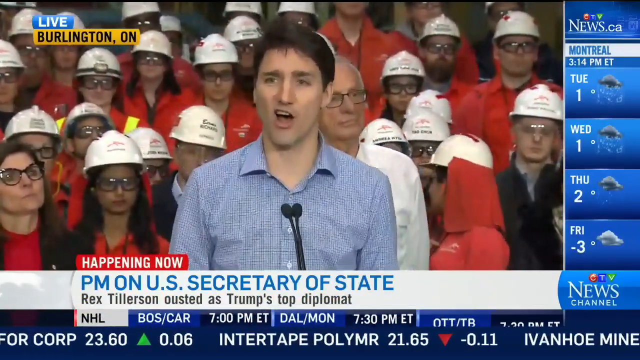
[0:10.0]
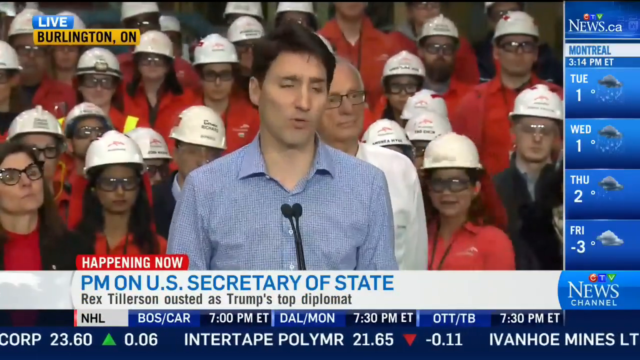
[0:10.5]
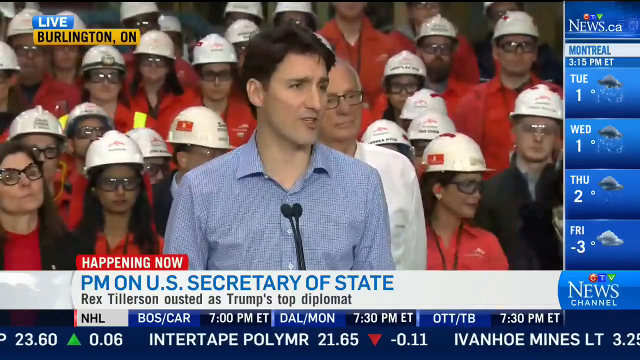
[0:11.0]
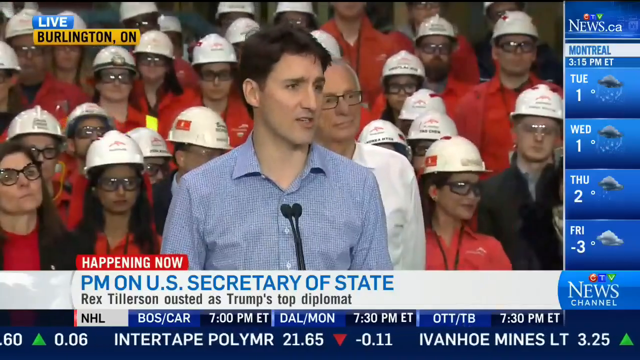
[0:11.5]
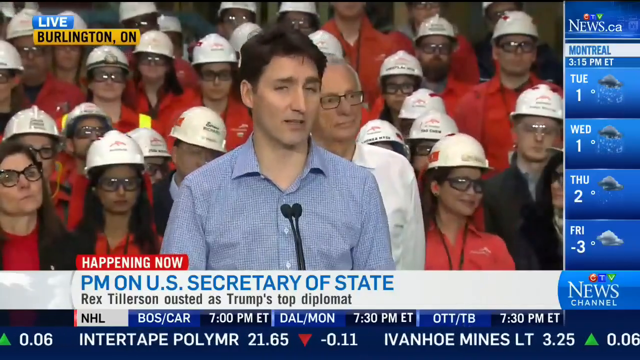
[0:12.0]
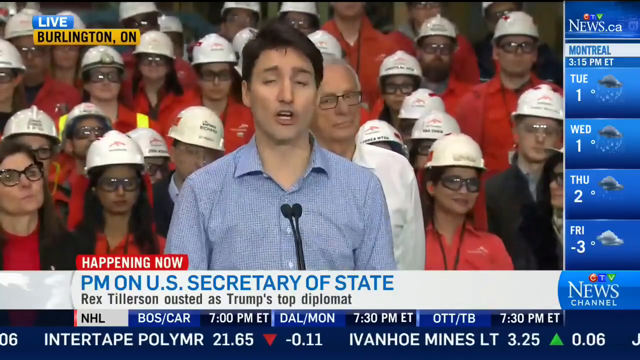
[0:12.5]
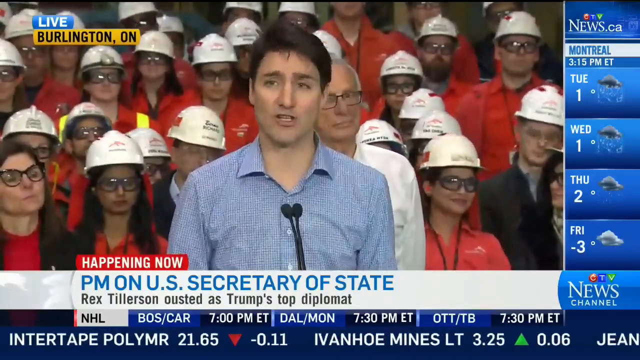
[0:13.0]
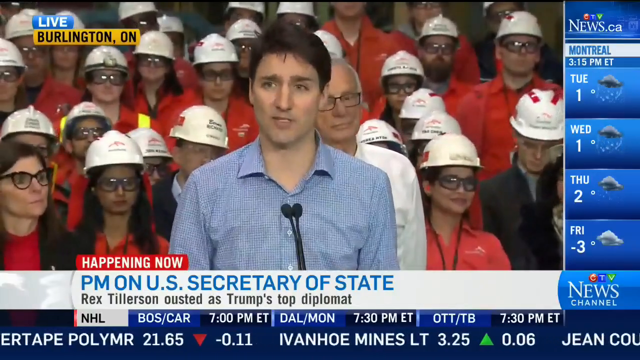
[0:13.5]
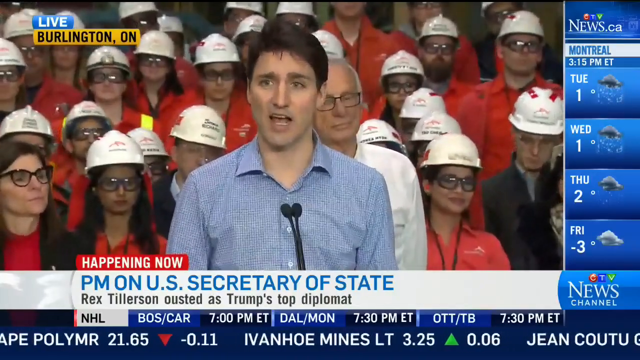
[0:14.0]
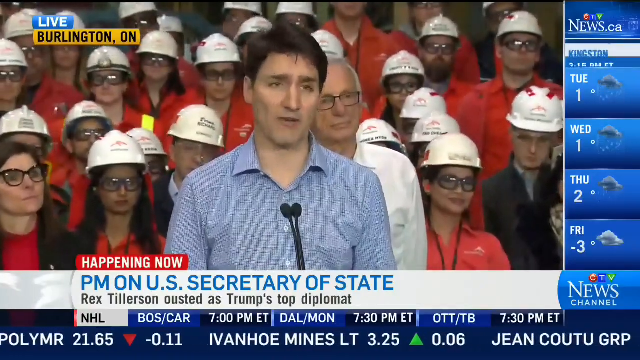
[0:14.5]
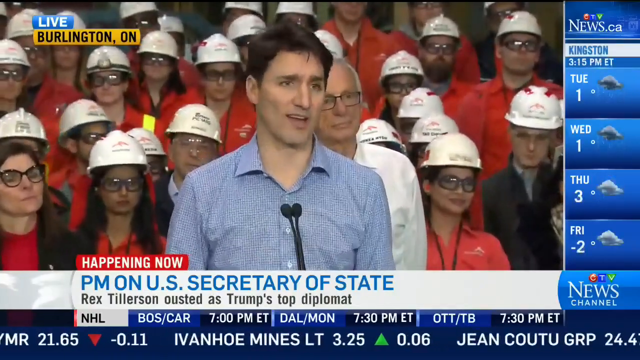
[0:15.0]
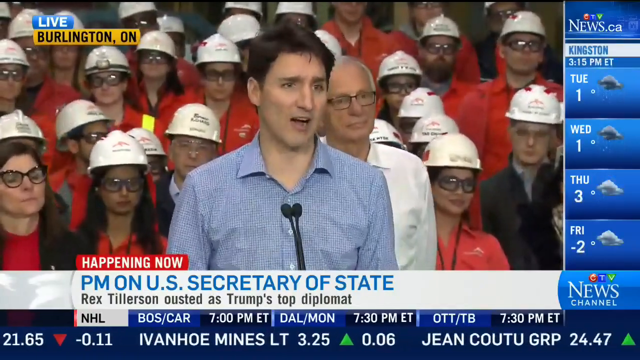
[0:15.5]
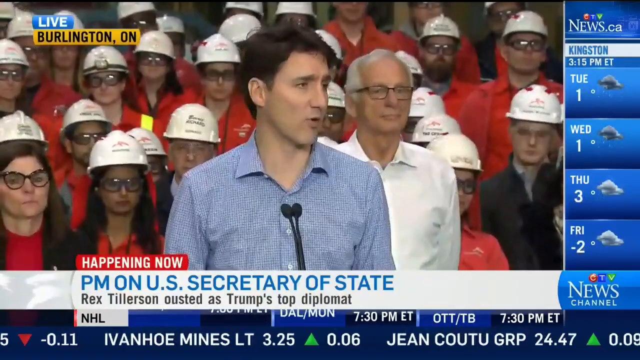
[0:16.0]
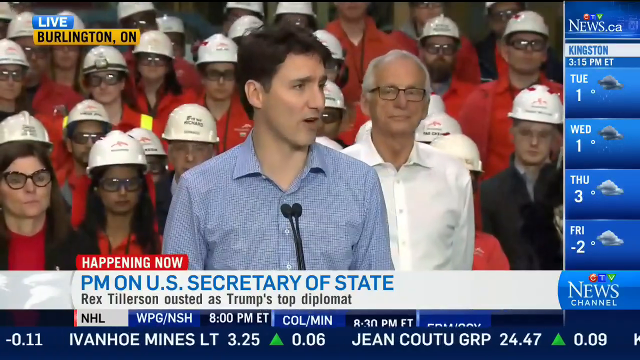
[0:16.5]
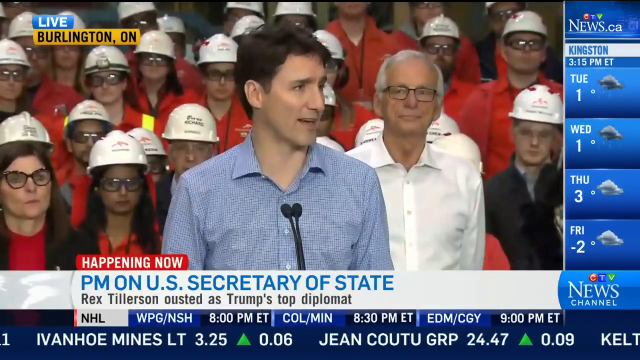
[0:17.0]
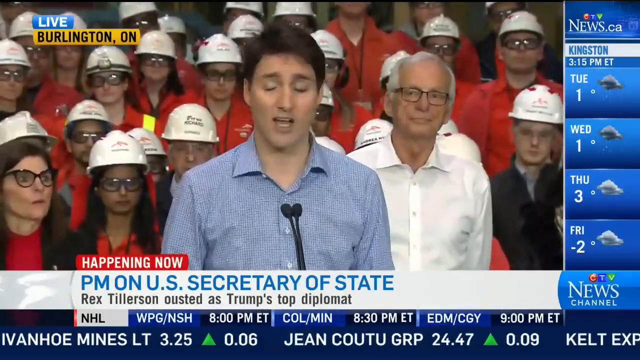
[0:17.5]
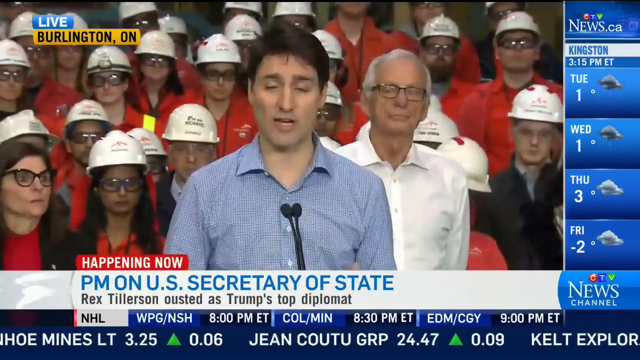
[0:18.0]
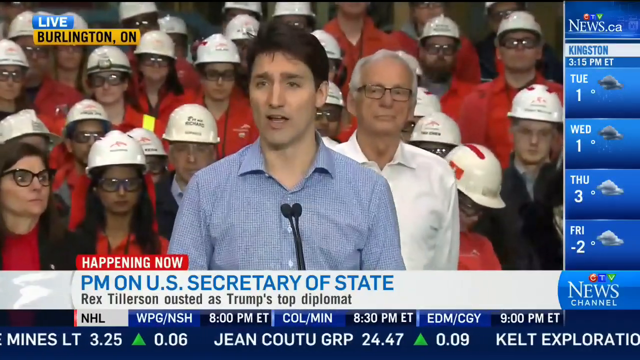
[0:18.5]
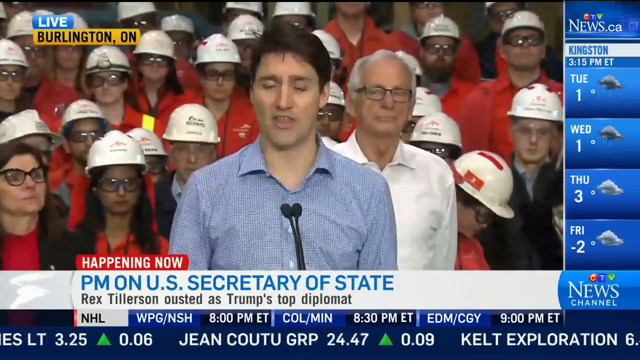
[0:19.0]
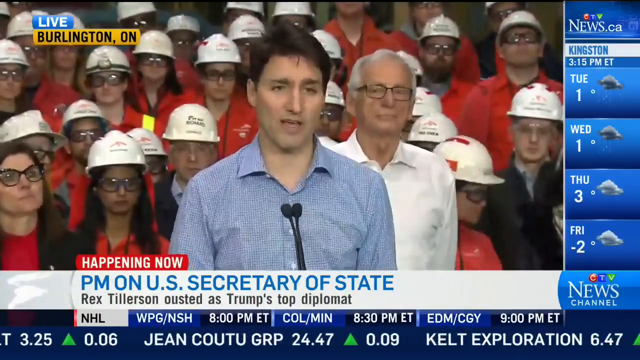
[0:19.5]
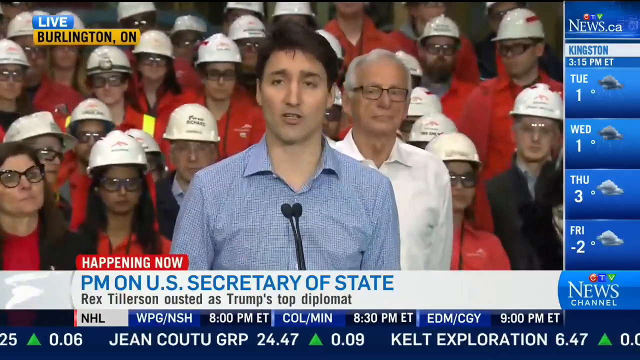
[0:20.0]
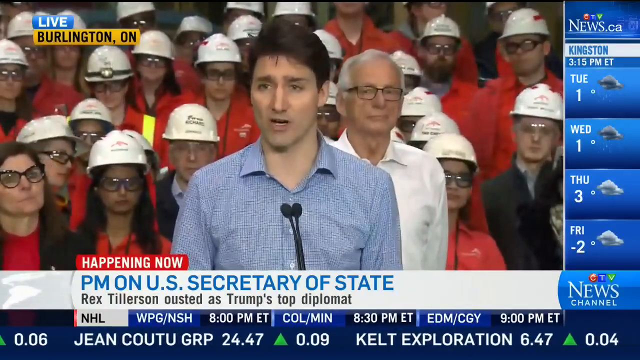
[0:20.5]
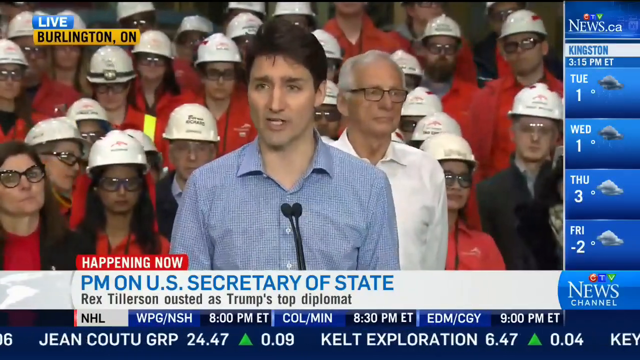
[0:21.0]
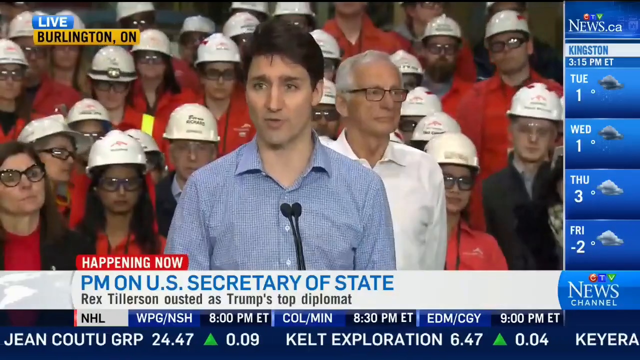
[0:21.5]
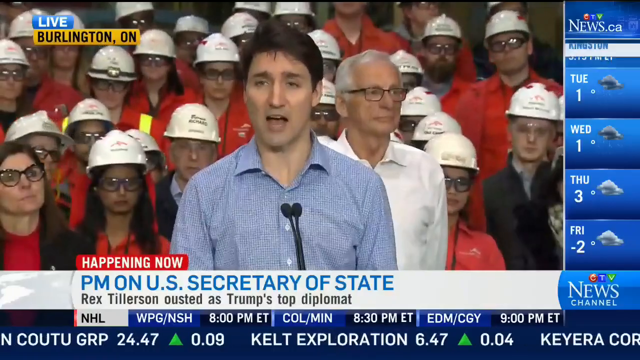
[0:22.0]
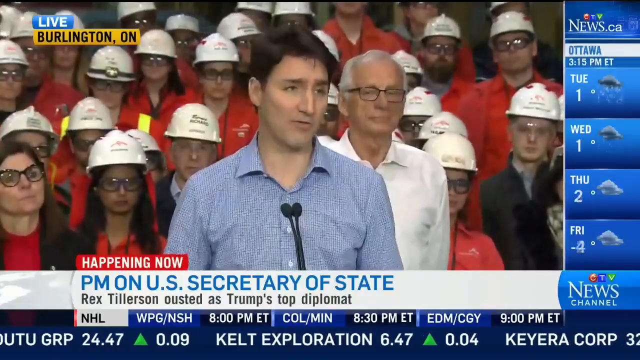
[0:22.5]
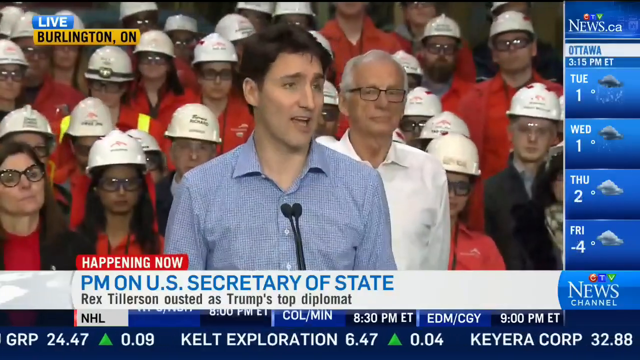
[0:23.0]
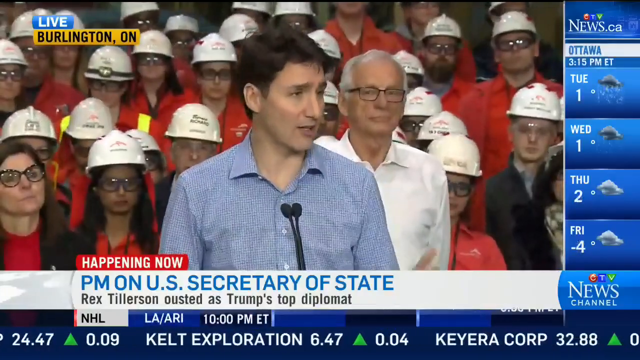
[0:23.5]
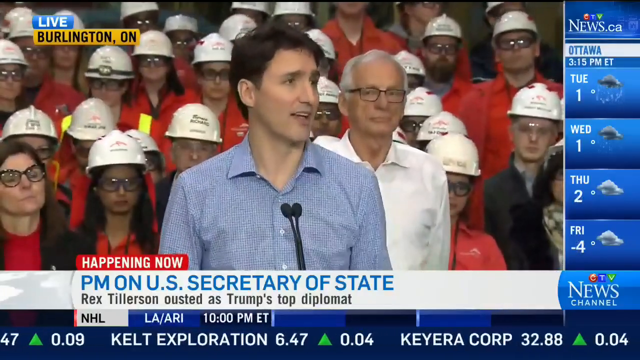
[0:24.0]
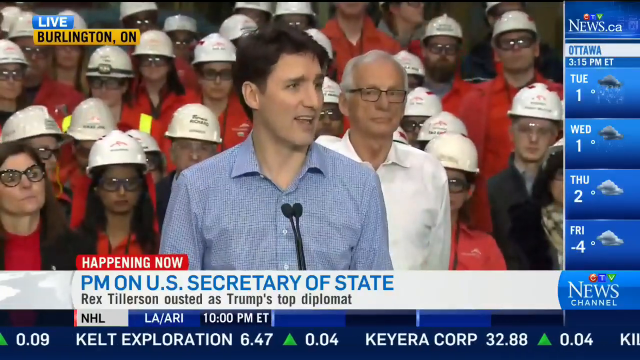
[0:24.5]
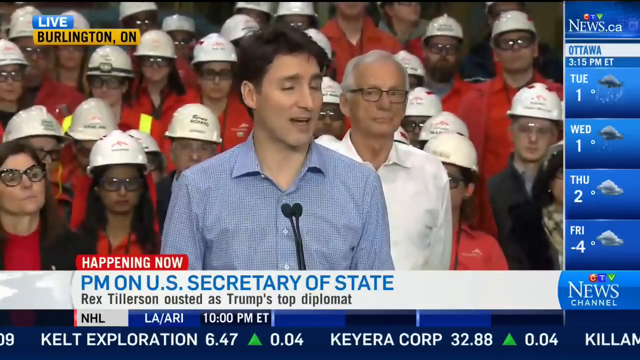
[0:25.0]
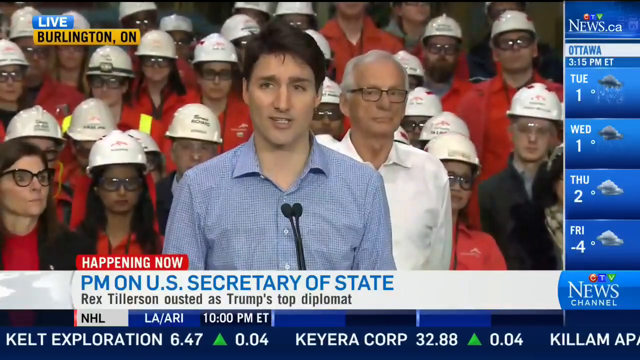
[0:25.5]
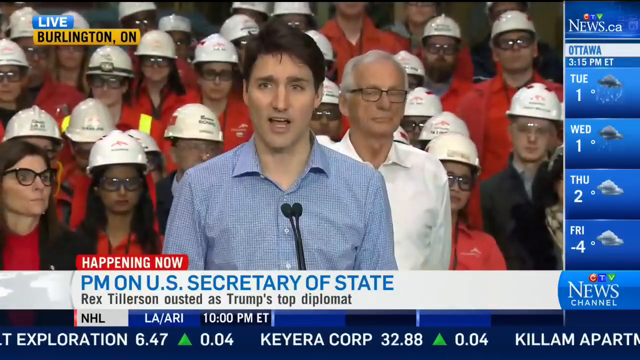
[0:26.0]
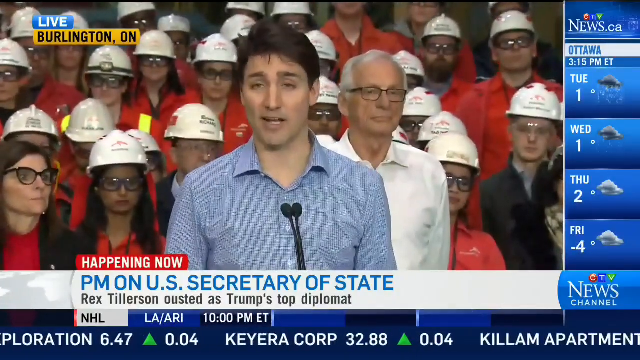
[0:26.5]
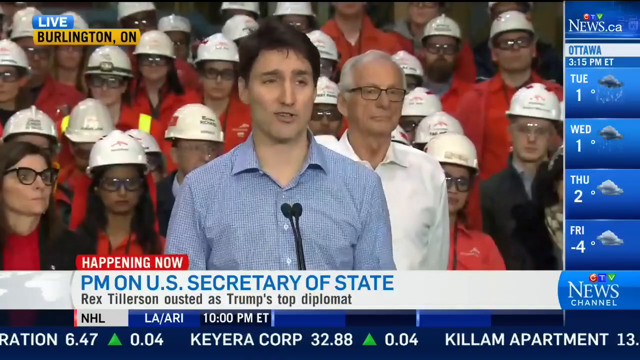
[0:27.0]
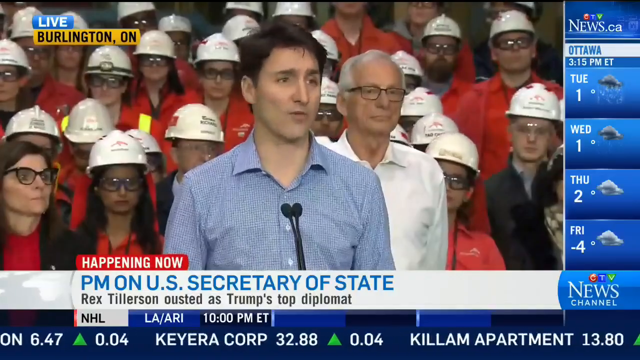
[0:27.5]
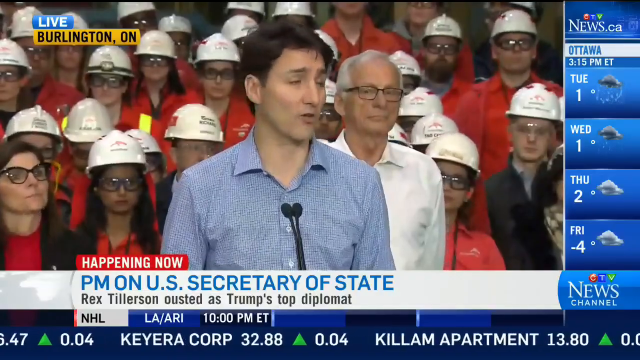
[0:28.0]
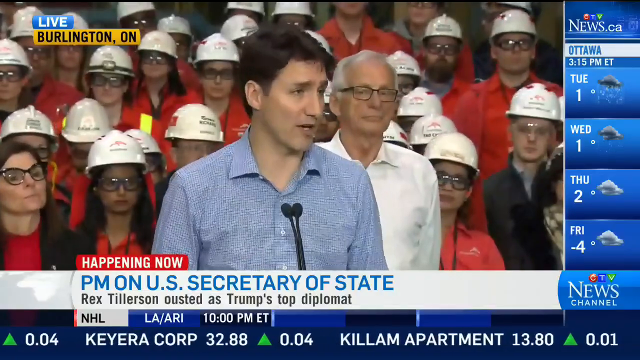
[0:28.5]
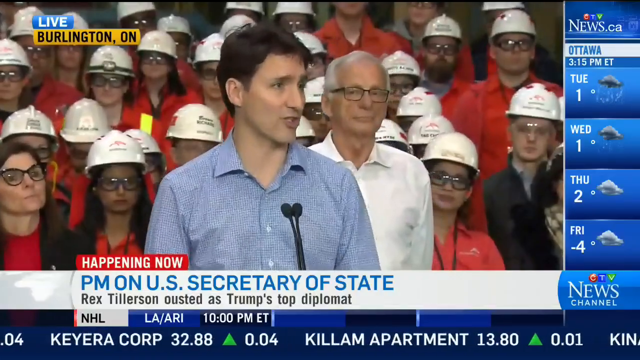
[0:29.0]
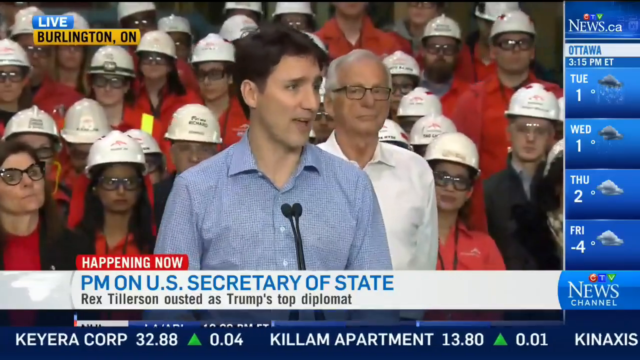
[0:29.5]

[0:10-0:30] The man in the blue shirt keeps talking while the crowd behind him is quiet and standing still; some talk to one another and some nod toward the person in front. One of the helmets has a light mounted on the front. The workers wear protective or safety glasses, all of them except the man talking in front, who has no helmet and no safety glasses. He wears just a blue t-shirt with some white here and there. Two small black microphones are in front of him. Along the bottom of the channel, stock listings slide from right to left; the ones in green are increasing, while the ones with a red arrow are dropping.